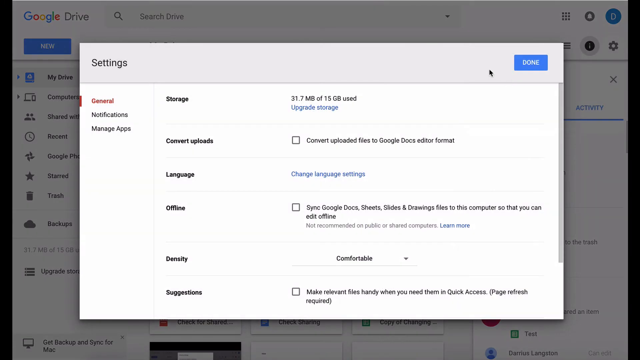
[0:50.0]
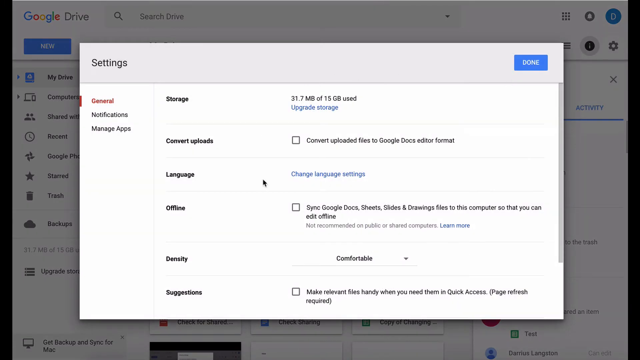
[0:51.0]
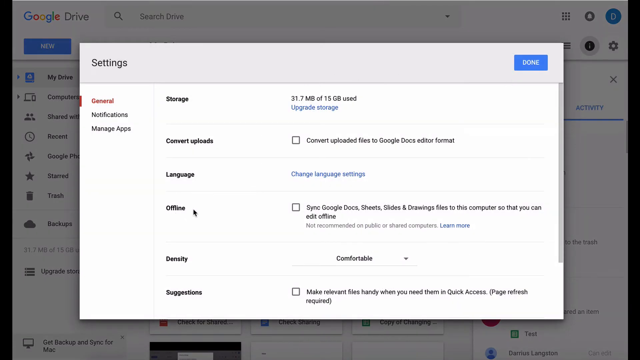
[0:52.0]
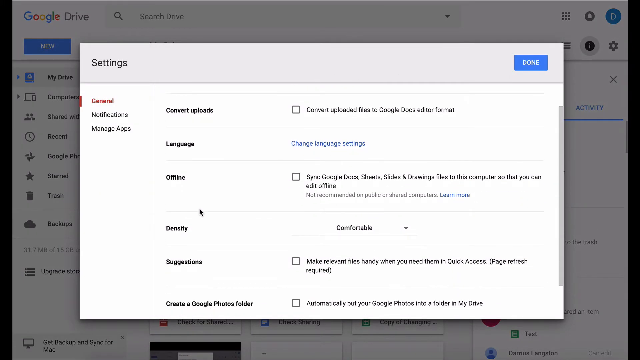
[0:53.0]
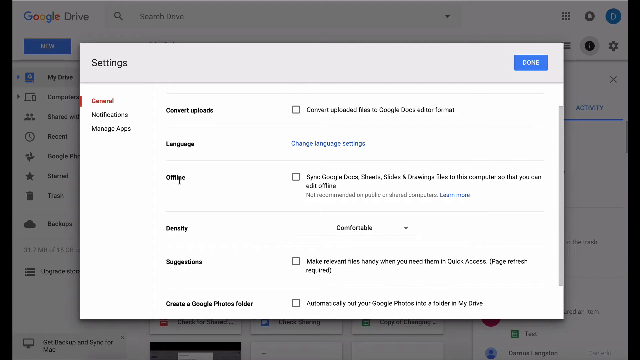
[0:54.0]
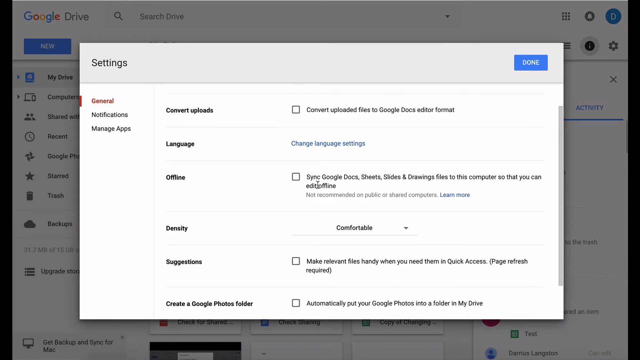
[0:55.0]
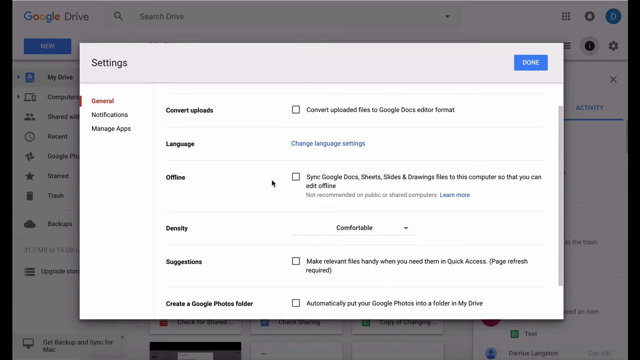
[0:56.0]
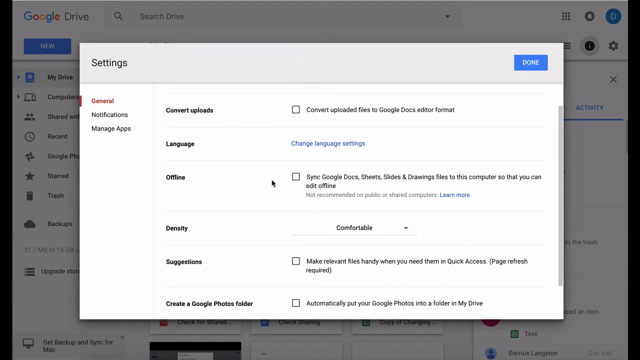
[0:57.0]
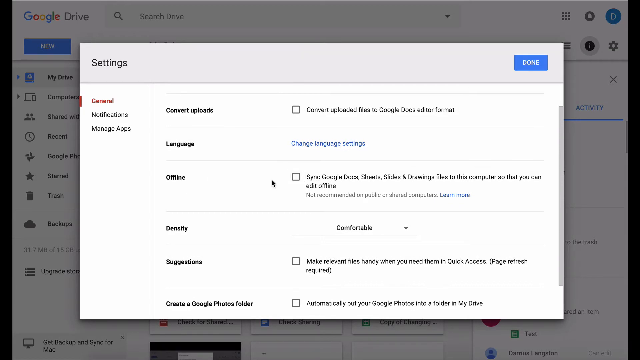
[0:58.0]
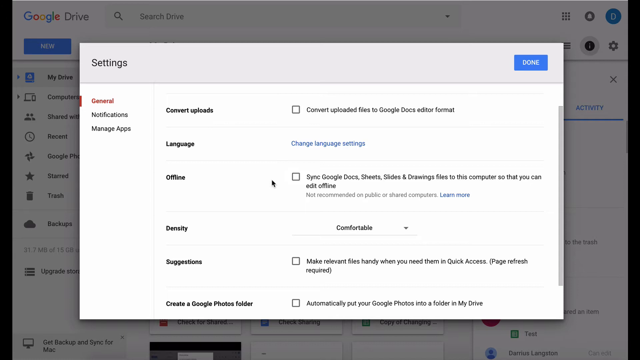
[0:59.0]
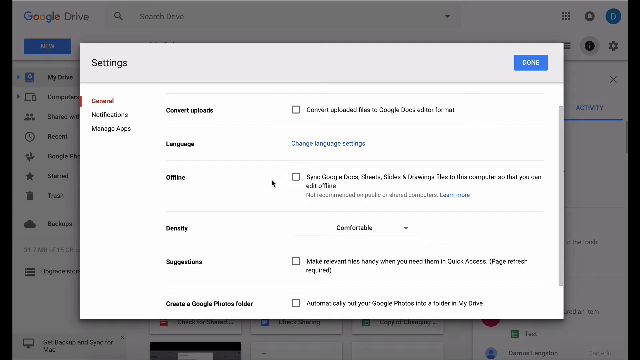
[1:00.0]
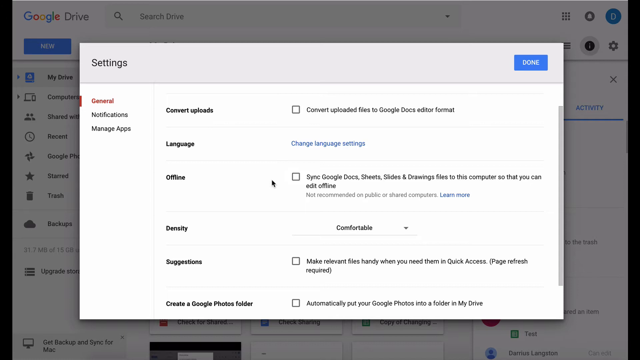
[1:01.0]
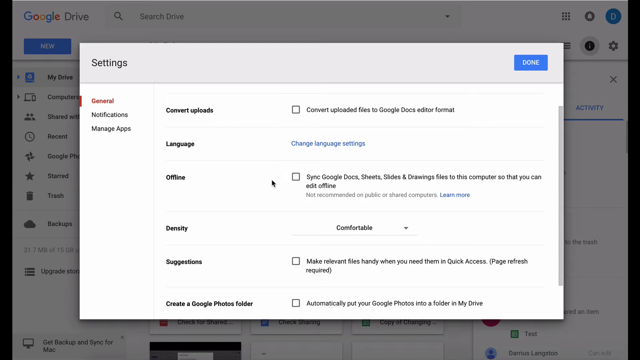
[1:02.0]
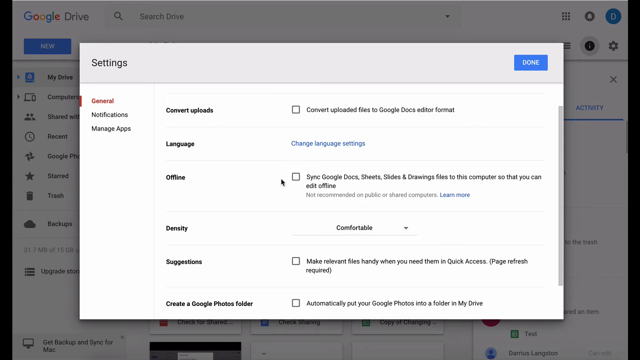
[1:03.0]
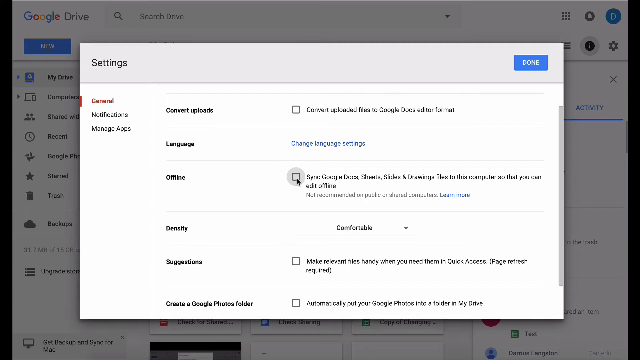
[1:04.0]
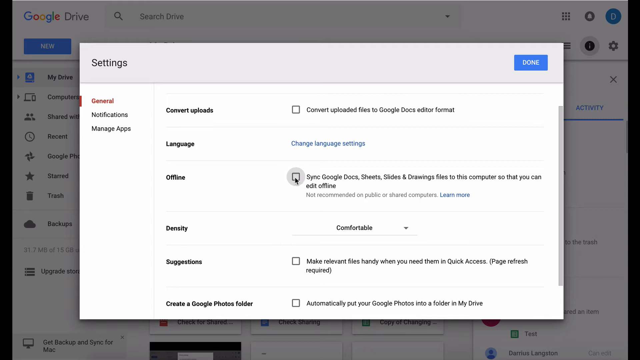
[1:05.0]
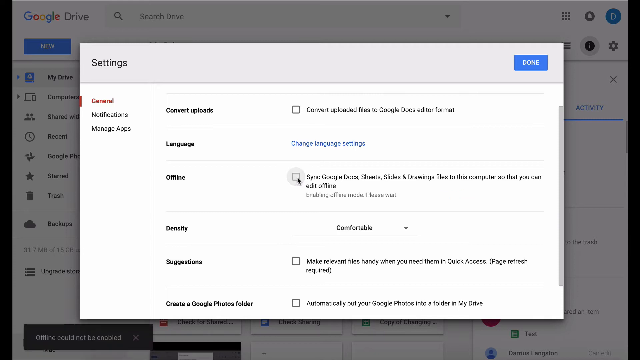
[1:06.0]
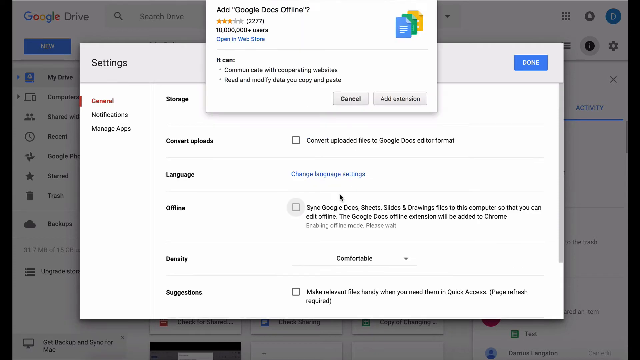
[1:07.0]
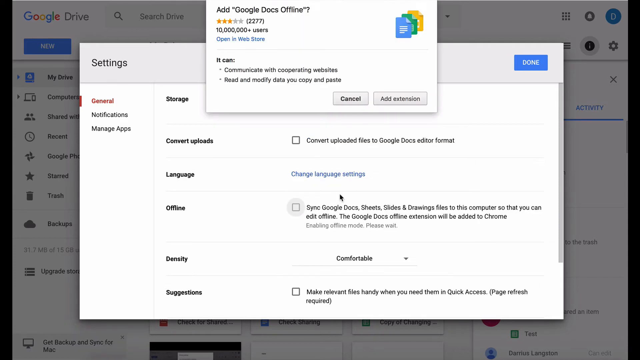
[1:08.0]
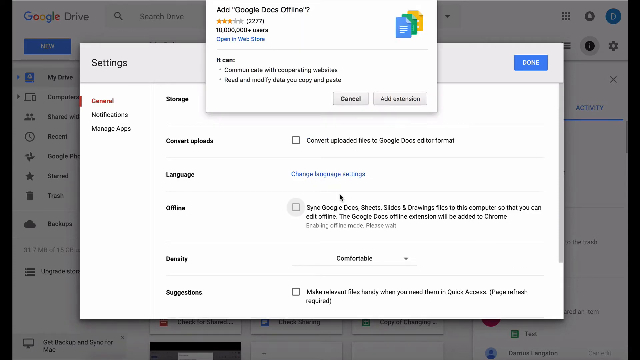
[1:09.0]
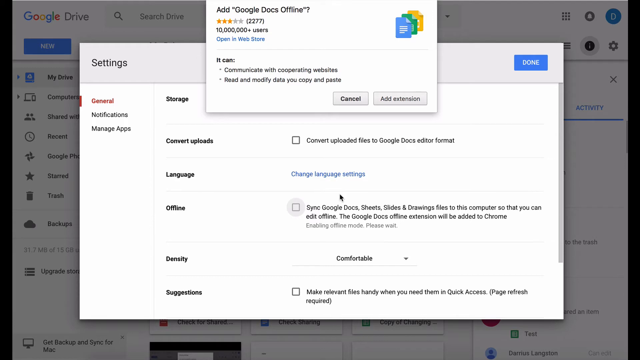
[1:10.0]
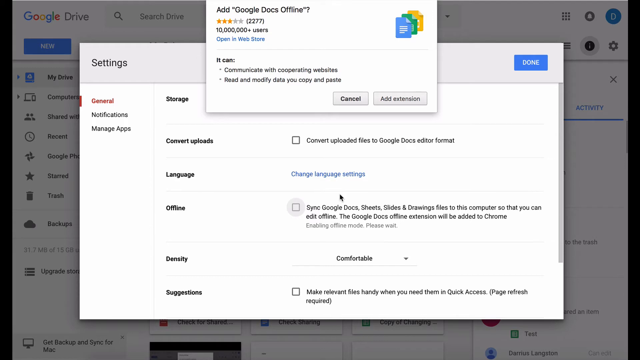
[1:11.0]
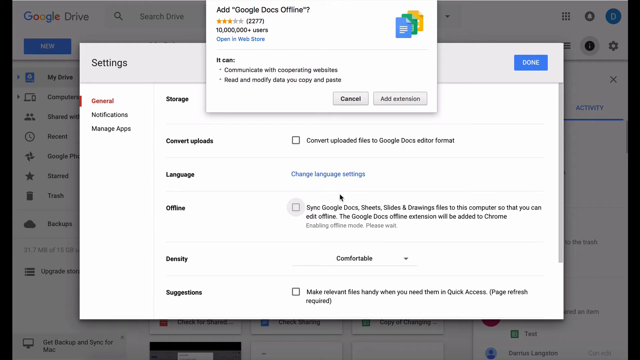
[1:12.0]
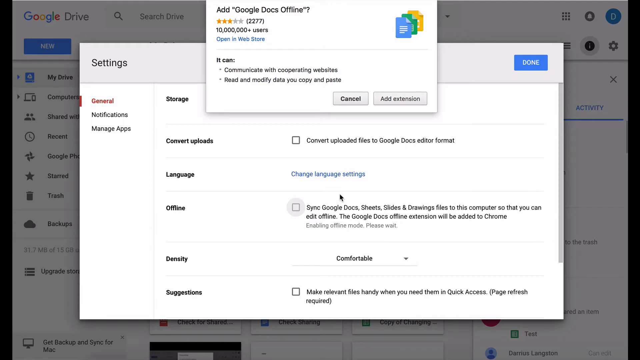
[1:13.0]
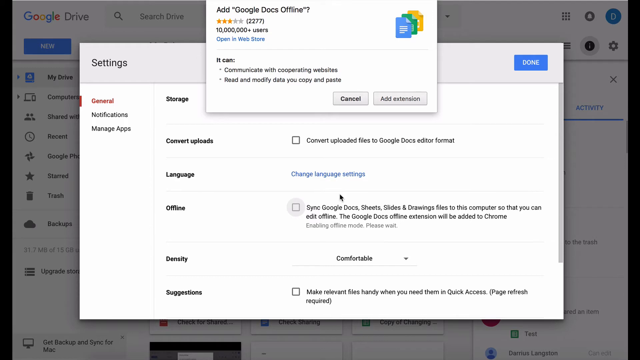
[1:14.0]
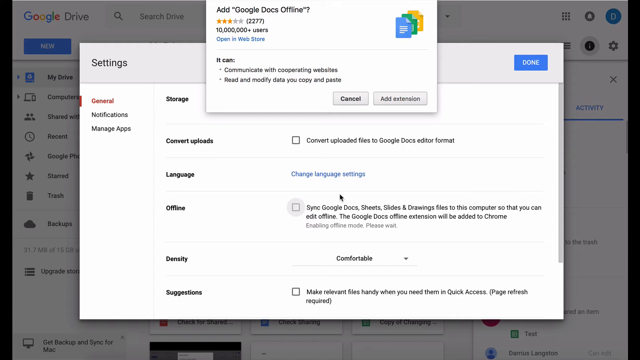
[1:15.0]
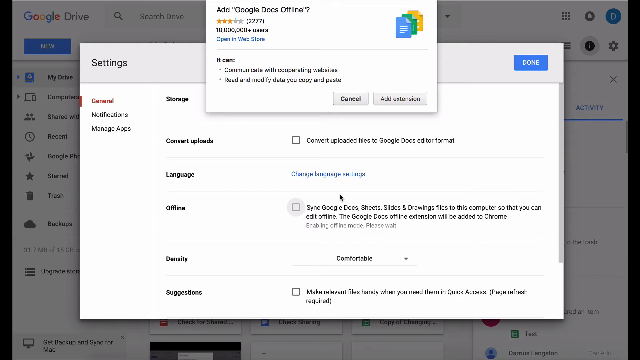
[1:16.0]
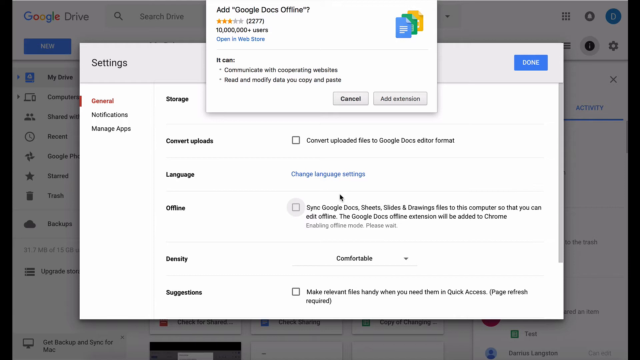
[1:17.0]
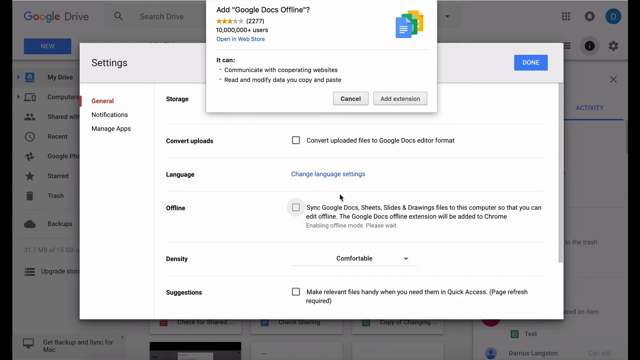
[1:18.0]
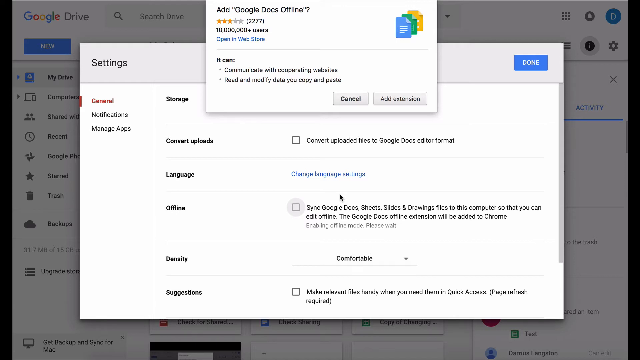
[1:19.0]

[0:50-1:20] A Google Drive webpage is open to the settings, which have three options: "General", "Notifications" and "Manage apps". The General option is selected, showing "Storage" with 31.7 megabytes of 15 gigabytes used and an option to upgrade storage below it. Below that is "Convert uploads" with an unchecked box next to it and the text "Convert uploaded files to Google Docs editor format". Next is "Language" with "Change language settings" in blue letters. Below that is "Offline" with "Sync Google Docs, Sheets, Slides, and Drawings files to this computer so that you can edit offline", unchecked. Then come "Density" with "Comfortable", and "Suggestions" with "Make relevant files handy when you need them in Quick Access" and "Page refresh required". After the user scrolls down, "Create a Google Photos folder" and "Automatically put your Google Photos into a folder in My Drive" appear, unchecked.